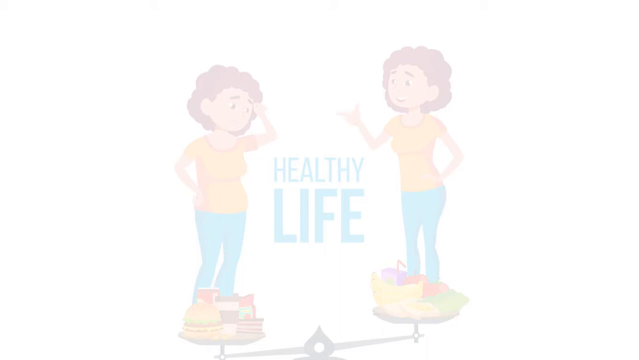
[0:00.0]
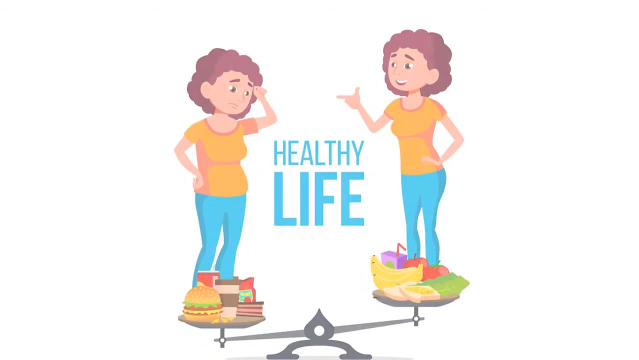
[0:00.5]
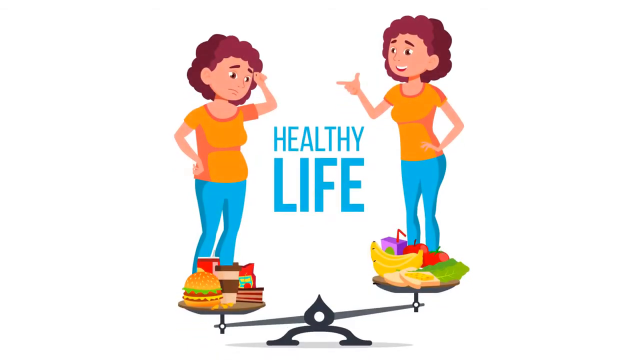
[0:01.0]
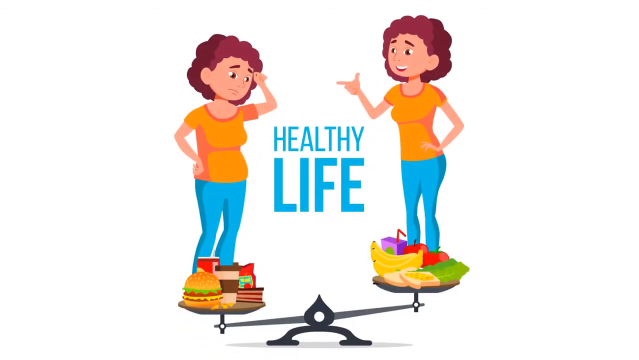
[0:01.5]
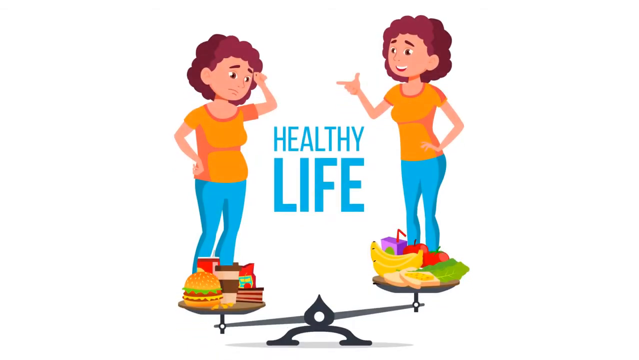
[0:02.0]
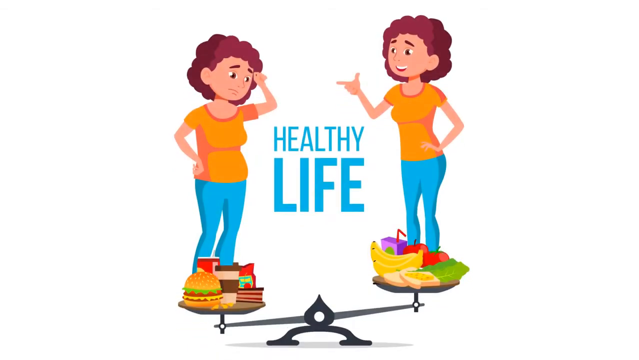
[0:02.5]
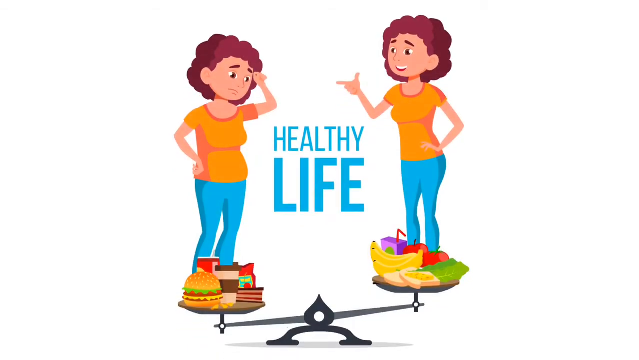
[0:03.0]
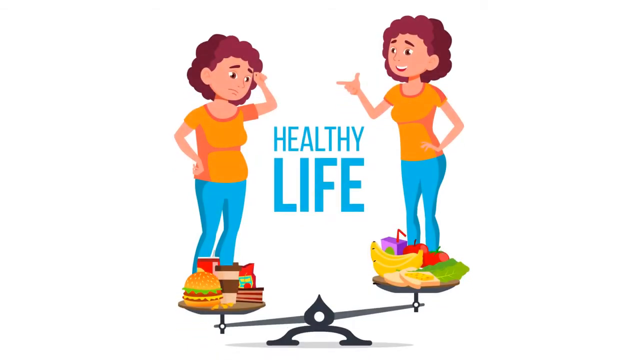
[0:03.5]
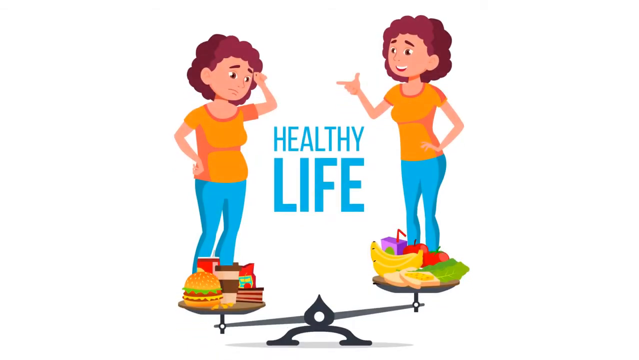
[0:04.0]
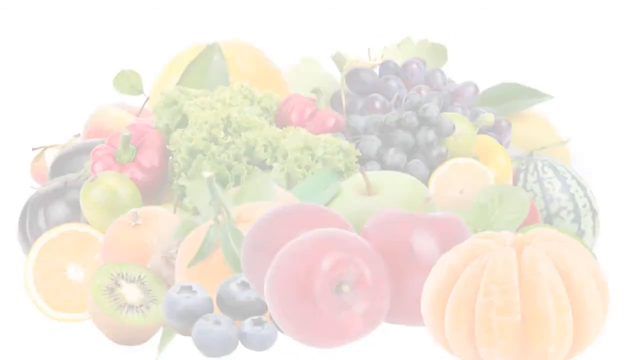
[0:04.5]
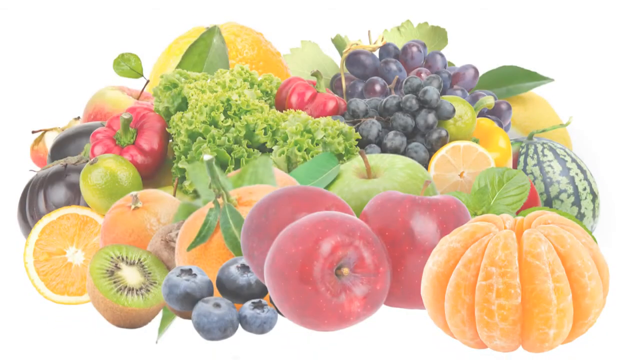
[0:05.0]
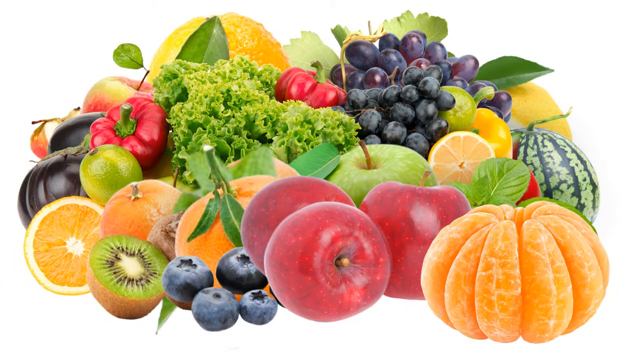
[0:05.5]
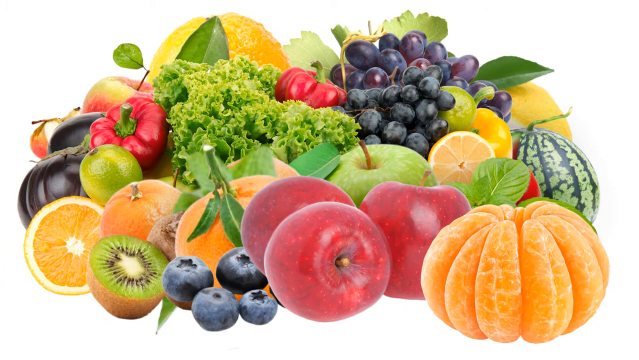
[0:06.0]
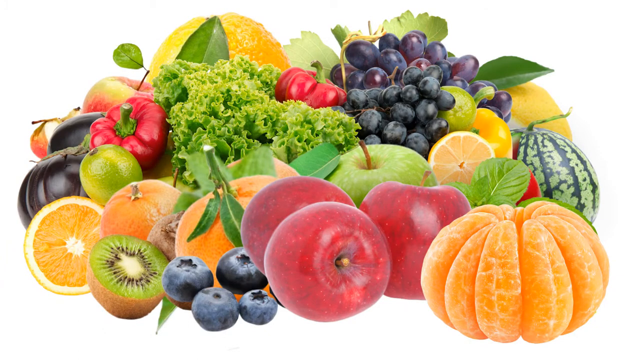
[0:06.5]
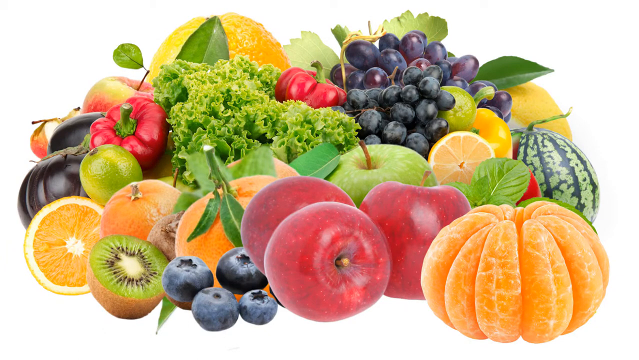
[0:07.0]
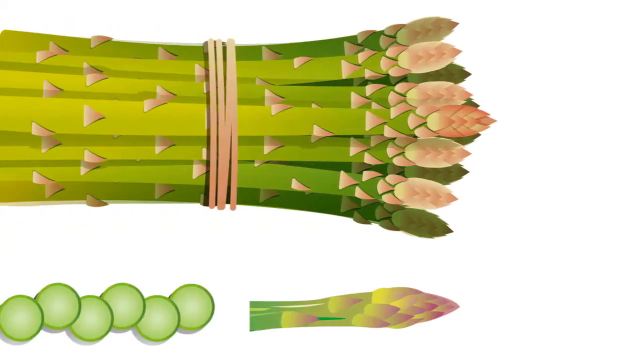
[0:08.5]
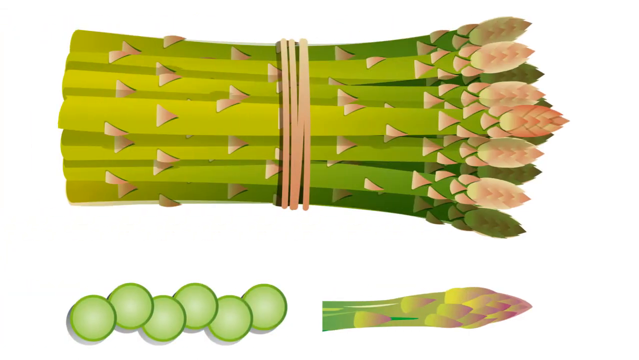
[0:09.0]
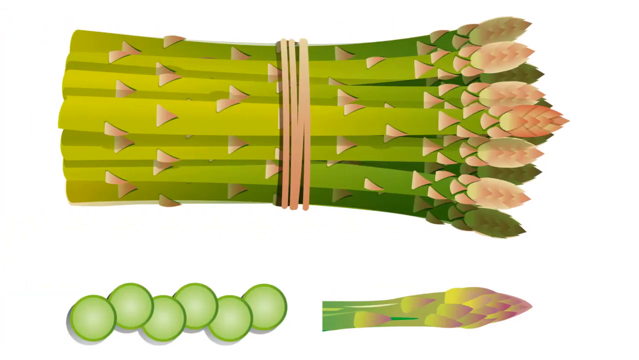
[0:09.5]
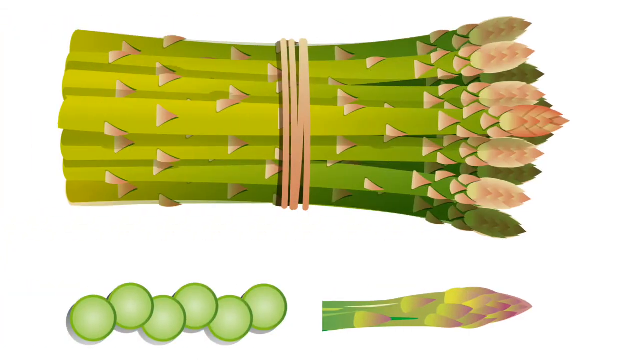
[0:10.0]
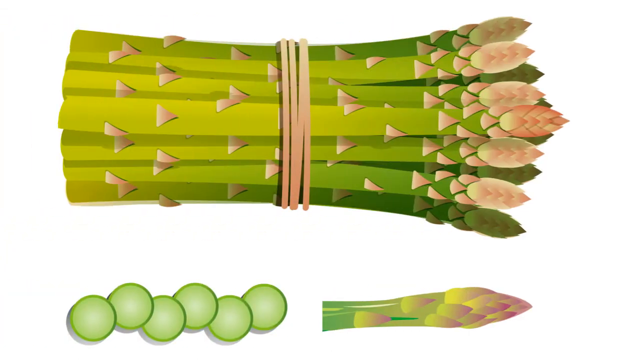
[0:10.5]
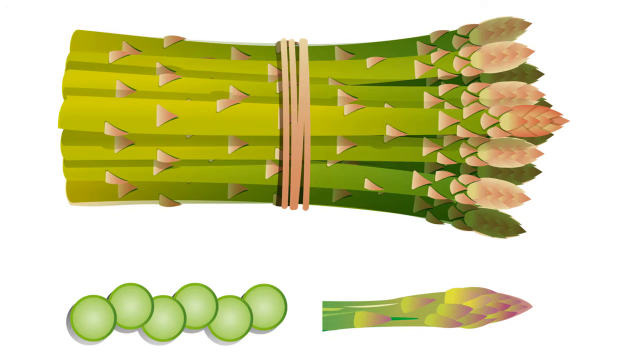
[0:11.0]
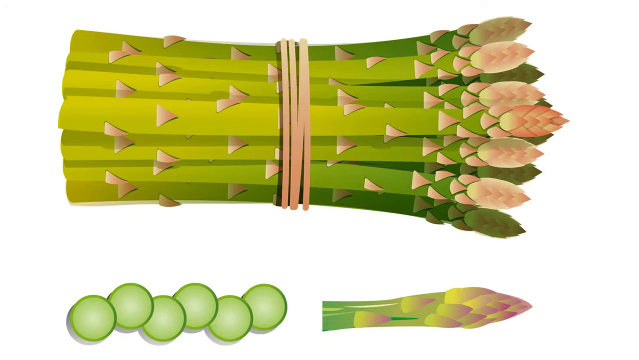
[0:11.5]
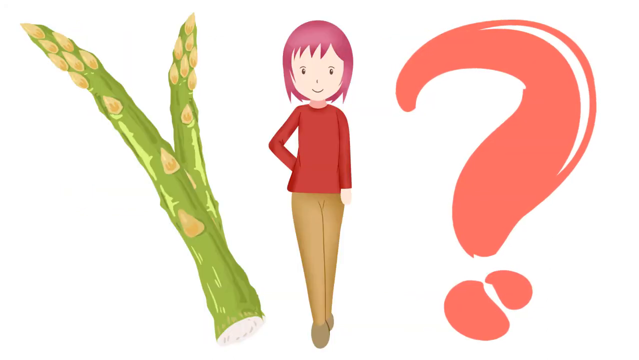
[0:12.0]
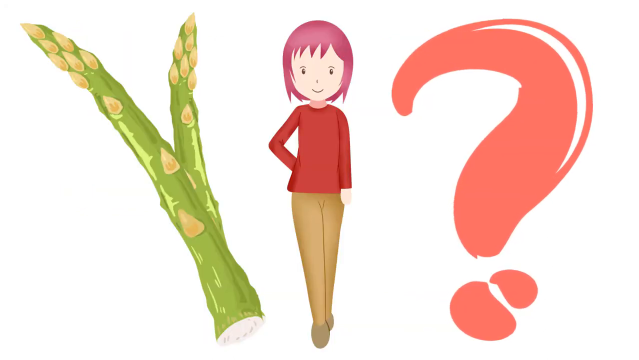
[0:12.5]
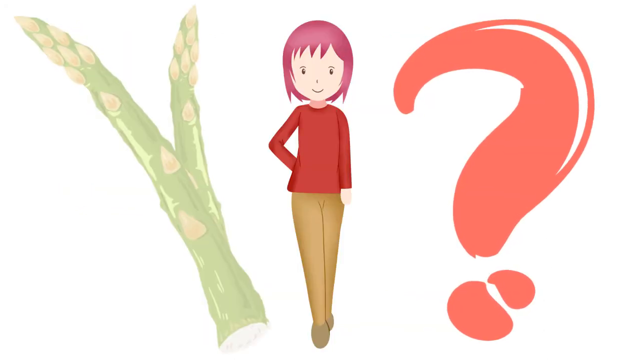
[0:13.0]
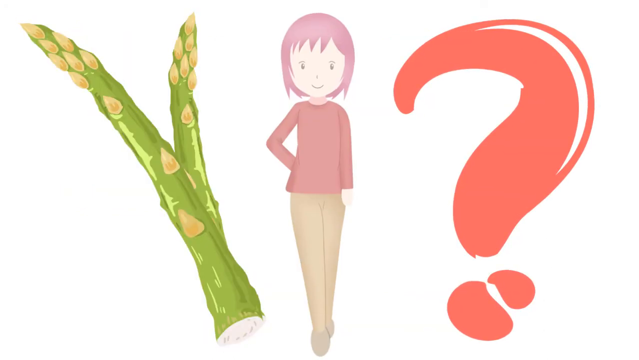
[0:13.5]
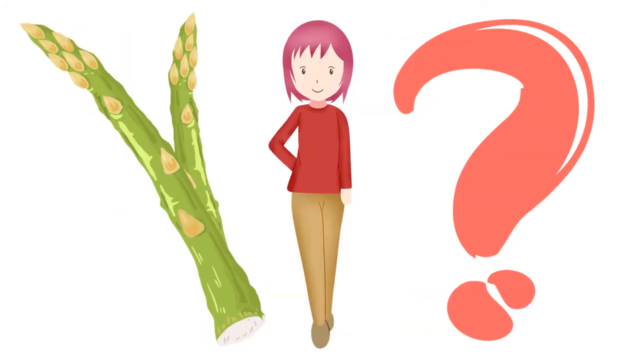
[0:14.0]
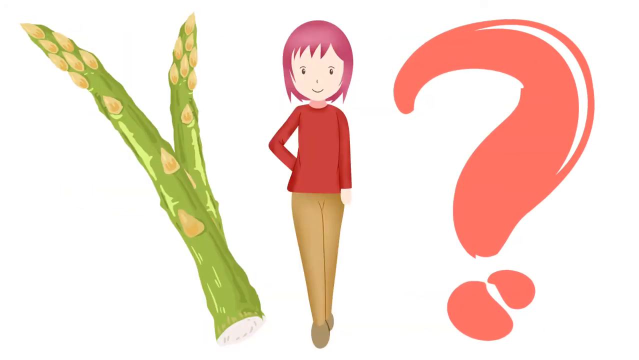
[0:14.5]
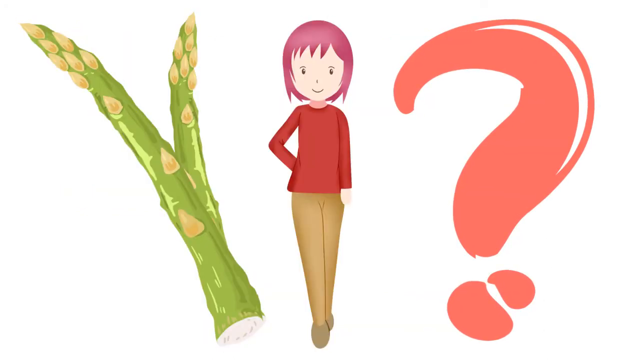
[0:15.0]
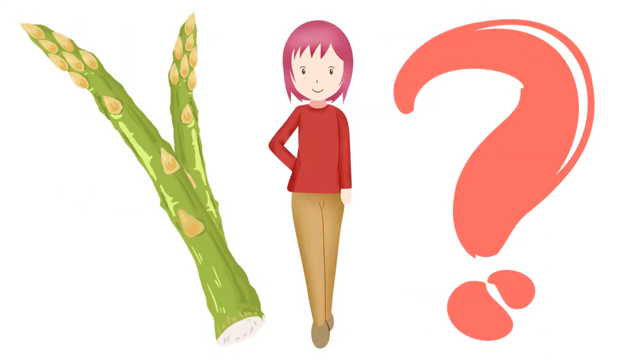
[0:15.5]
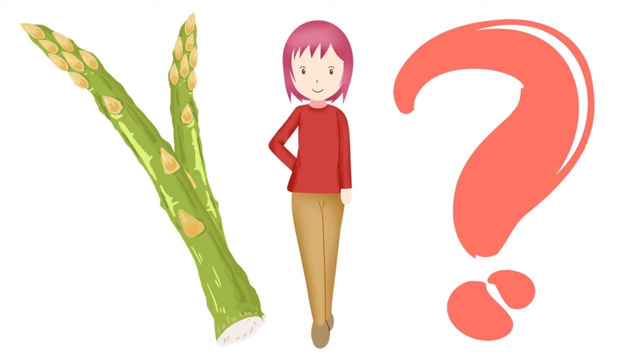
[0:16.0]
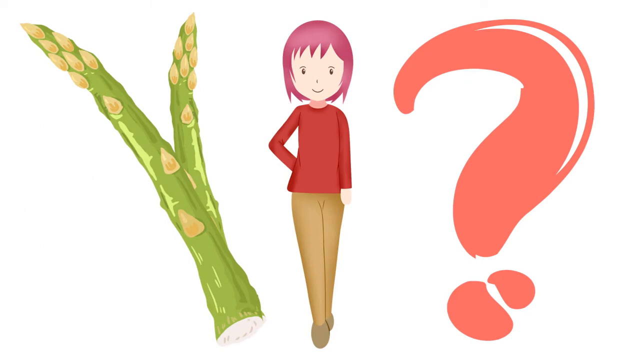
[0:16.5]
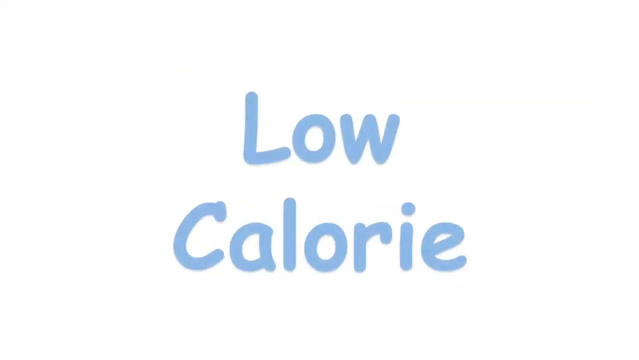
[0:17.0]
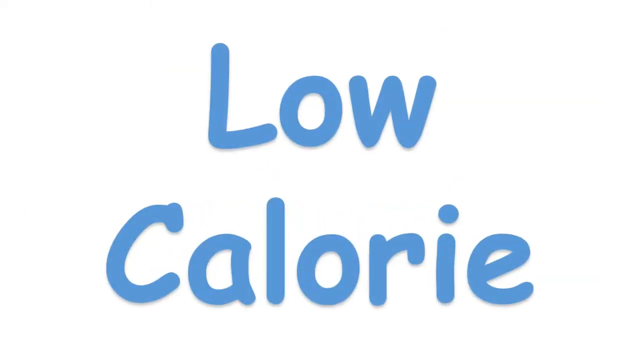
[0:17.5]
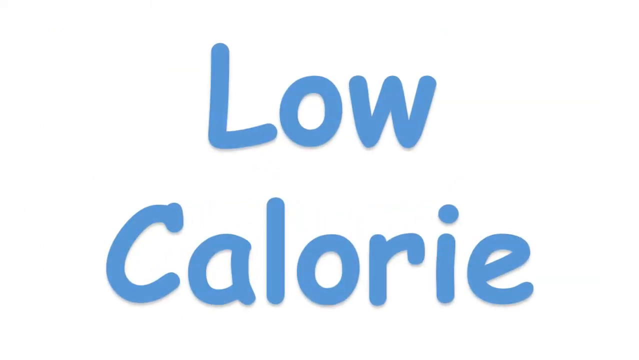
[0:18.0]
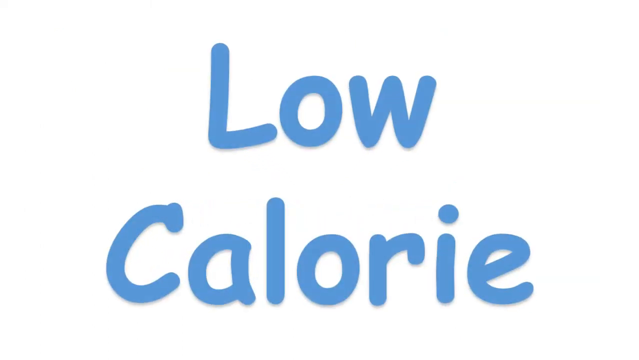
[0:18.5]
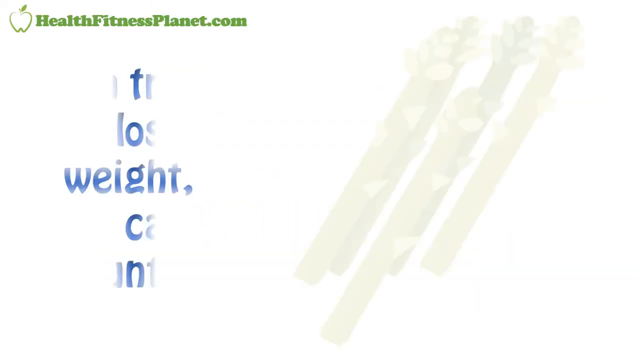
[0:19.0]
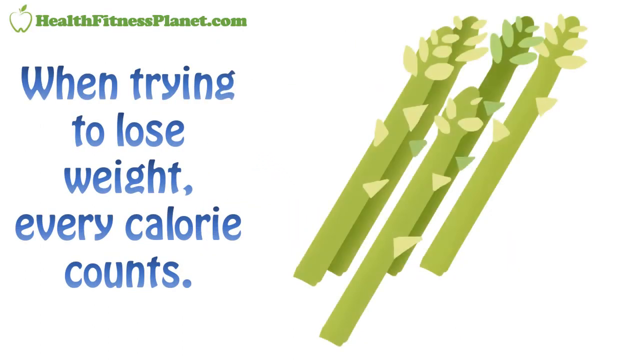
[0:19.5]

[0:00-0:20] The video opens with a cartoon illustration showing the same woman twice. On the left she wears an orange shirt and blue pants, has short curly brown hair, looks unhappy, and holds her left hand to her forehead. On the other side of a scale stands the same woman in the same orange shirt and blue pants with the same curly brown hair; she is slightly higher up on the scale and points with her right hand at the other woman. The woman on the left stands on the side of the scale loaded with a hamburger, drinks in a cup, a piece of cake, and some bagged snacks, while at the feet of the woman on the right are bananas, tomatoes, a piece of toast, and a juice box. The image then changes to a large illustration of fruits and vegetables: oranges, kiwi, blueberries, apples, and a peeled orange in the front; limes, red peppers, curly kale, black grapes, and a watermelon in the center; and a large citrus fruit and green leaves from other fruits and vegetables in the back. Next comes a drawing of a bunch of asparagus held with a rubber band at the top and a cross-section of a cut asparagus spear at the bottom. Another illustration follows, with two asparagus spears on the left side of the screen, a woman with red hair, a red shirt, and tan pants in the center, and a red question mark on the right. The words "low calorie" then appear on the screen in blue.